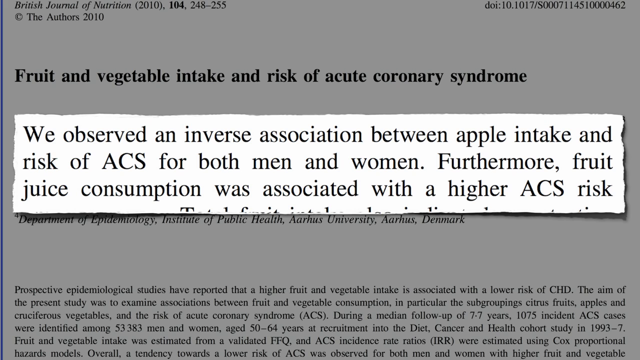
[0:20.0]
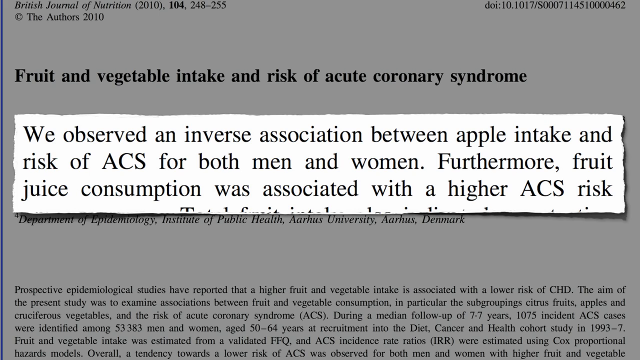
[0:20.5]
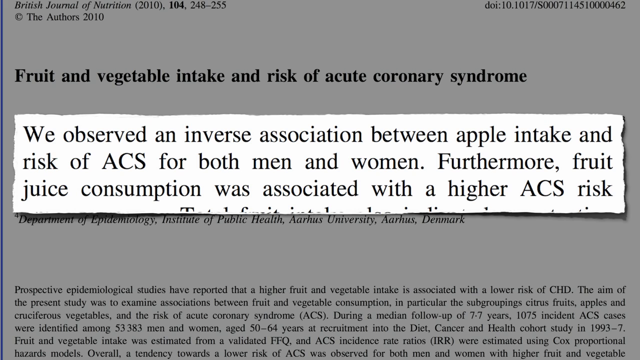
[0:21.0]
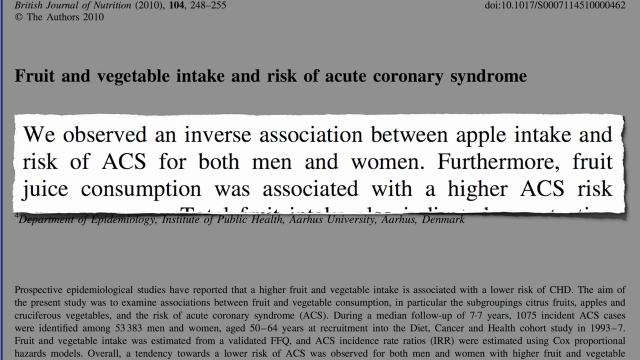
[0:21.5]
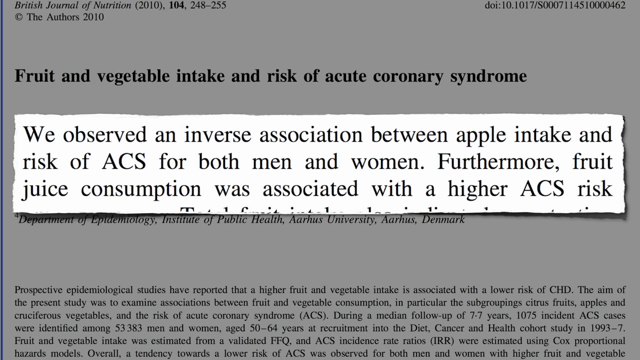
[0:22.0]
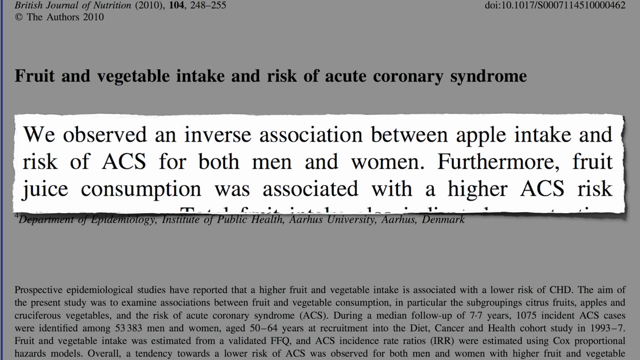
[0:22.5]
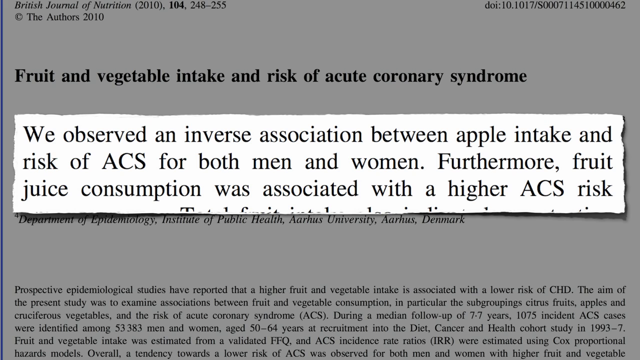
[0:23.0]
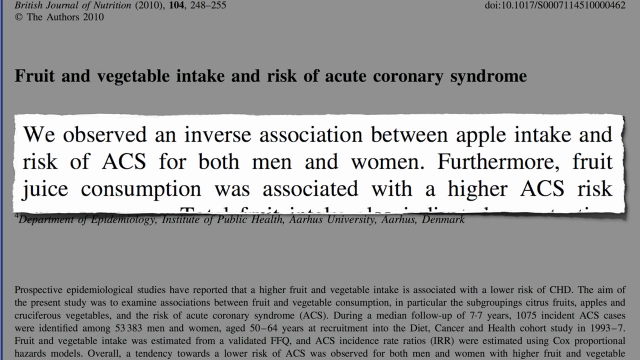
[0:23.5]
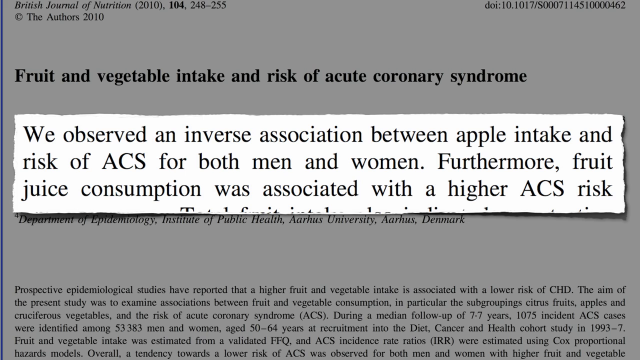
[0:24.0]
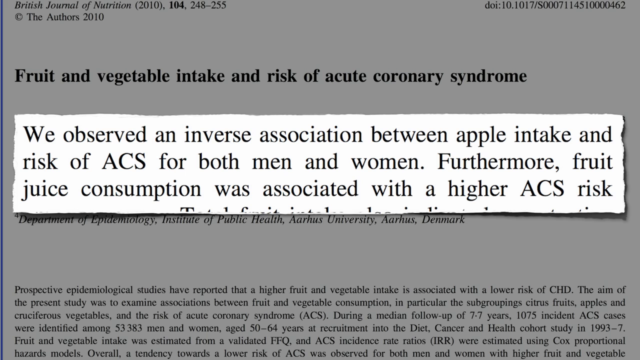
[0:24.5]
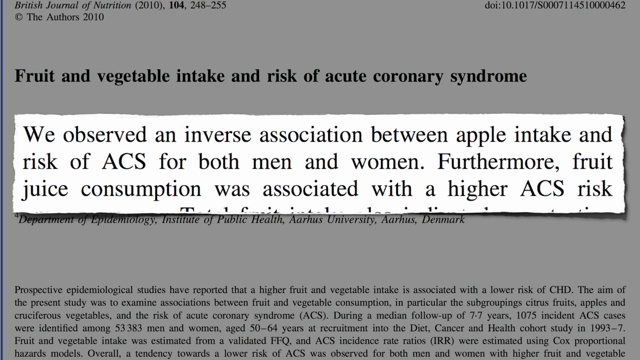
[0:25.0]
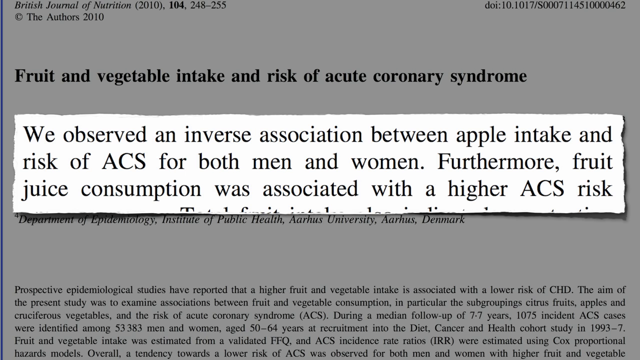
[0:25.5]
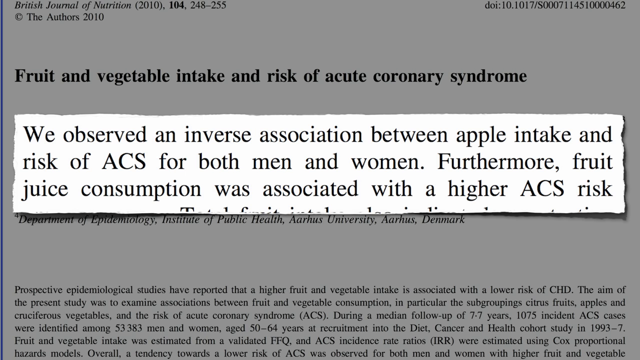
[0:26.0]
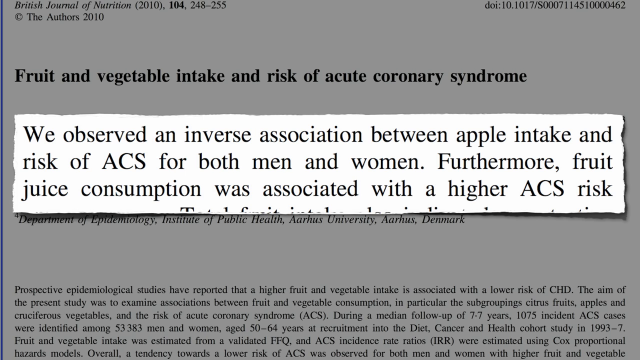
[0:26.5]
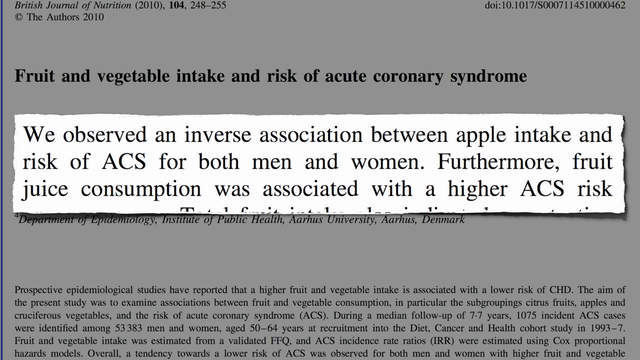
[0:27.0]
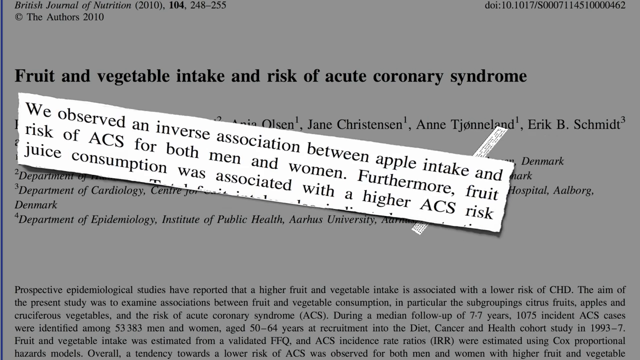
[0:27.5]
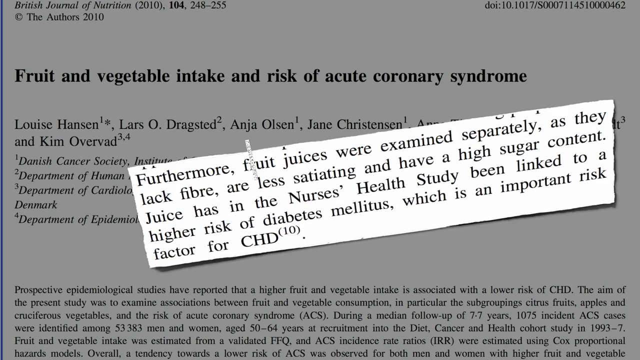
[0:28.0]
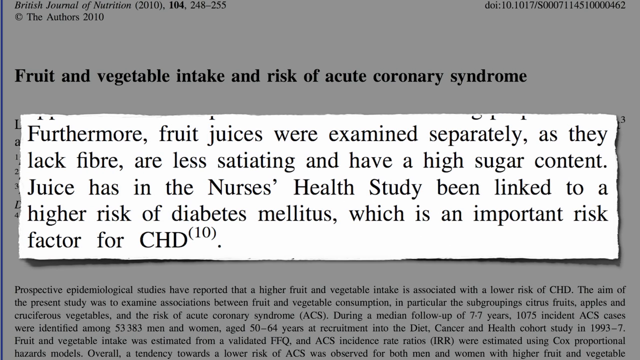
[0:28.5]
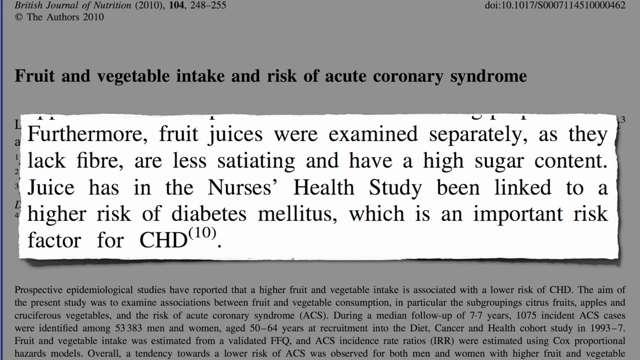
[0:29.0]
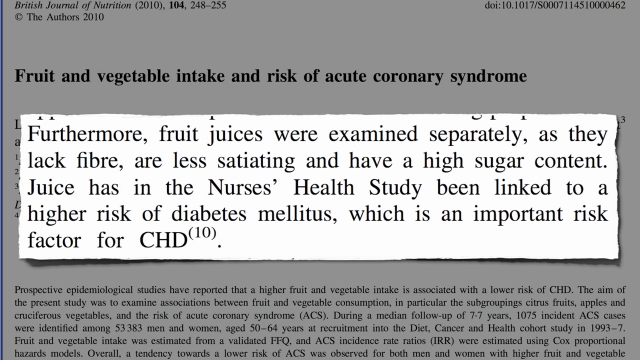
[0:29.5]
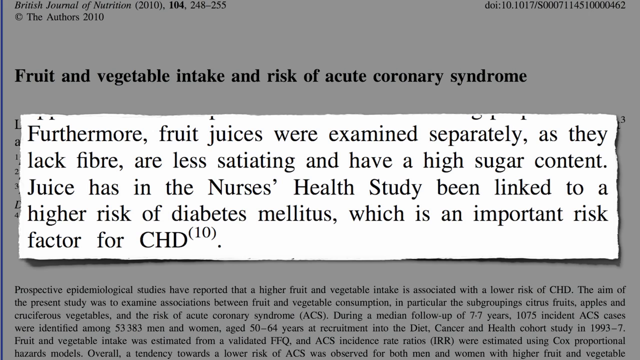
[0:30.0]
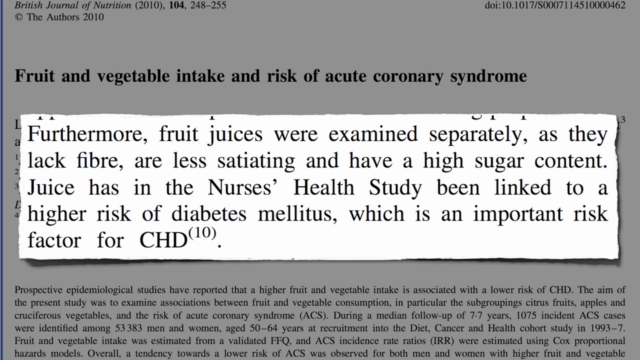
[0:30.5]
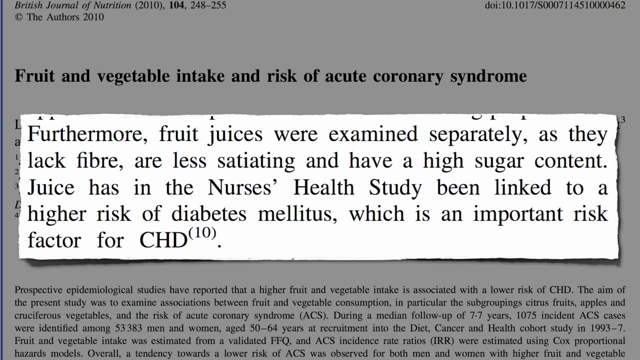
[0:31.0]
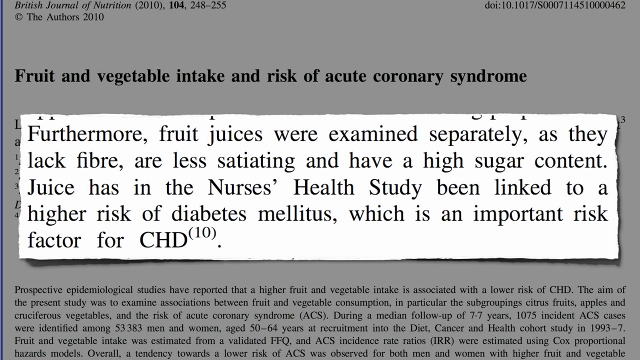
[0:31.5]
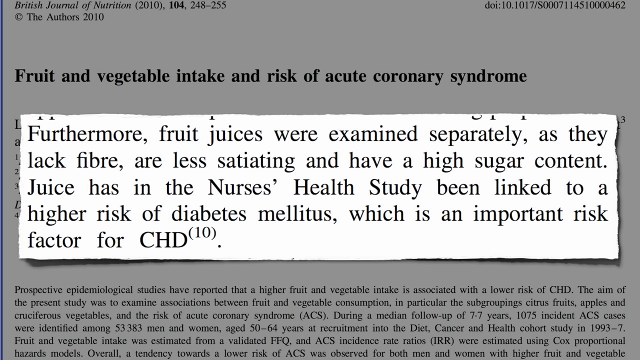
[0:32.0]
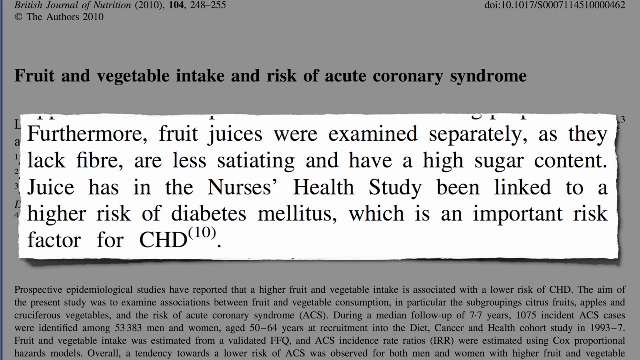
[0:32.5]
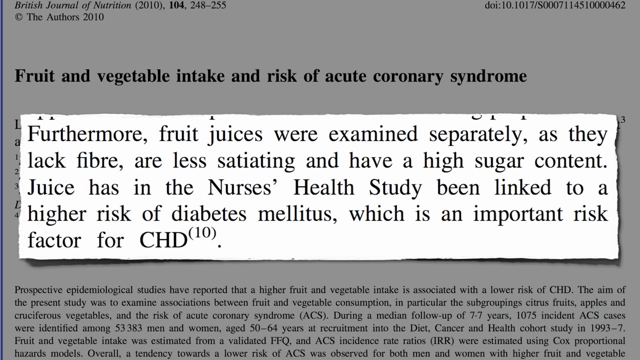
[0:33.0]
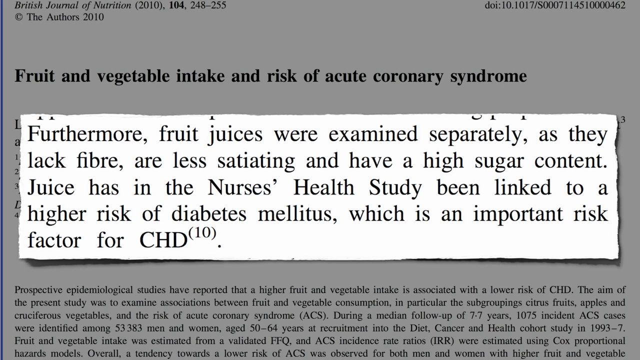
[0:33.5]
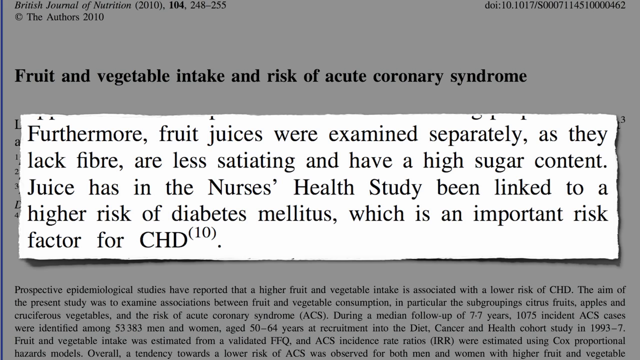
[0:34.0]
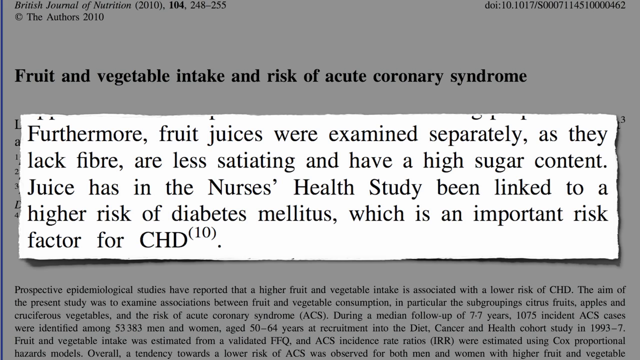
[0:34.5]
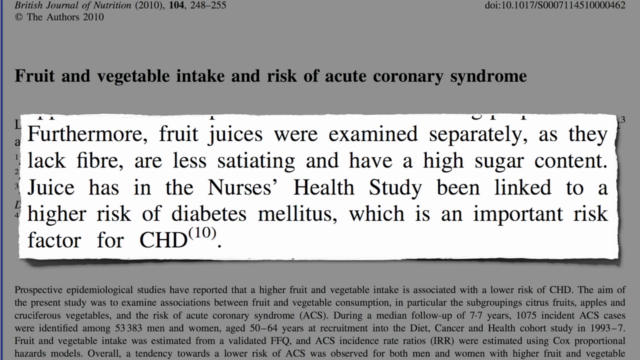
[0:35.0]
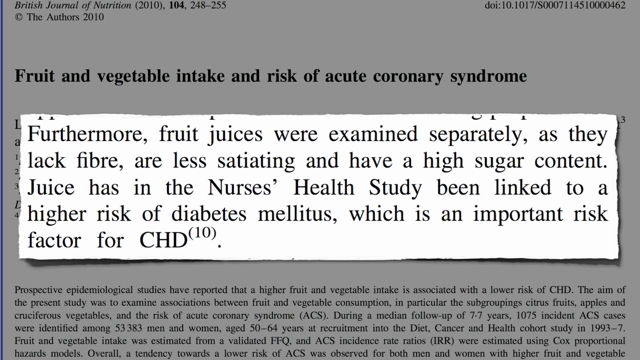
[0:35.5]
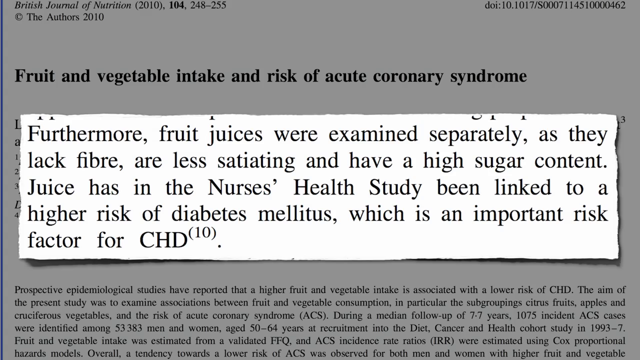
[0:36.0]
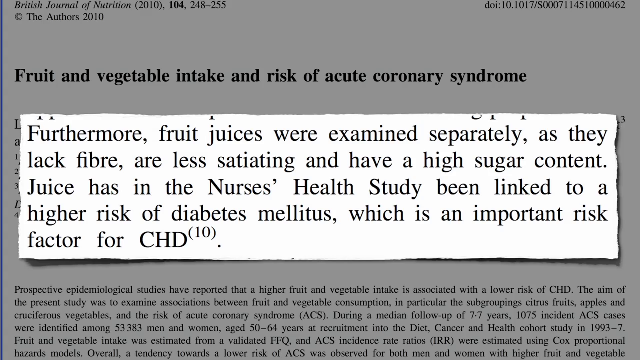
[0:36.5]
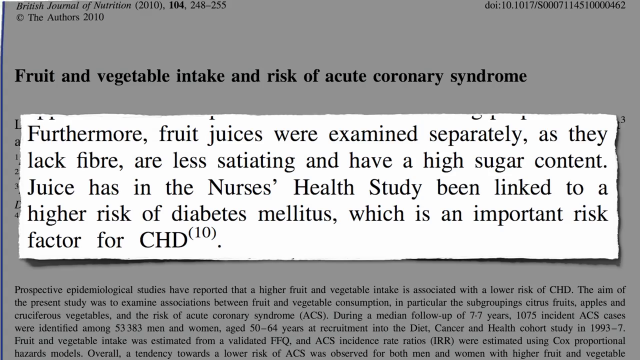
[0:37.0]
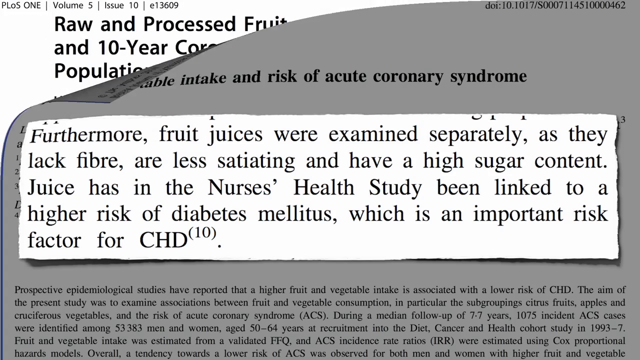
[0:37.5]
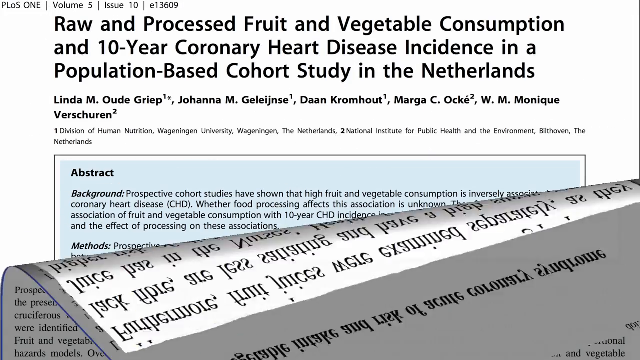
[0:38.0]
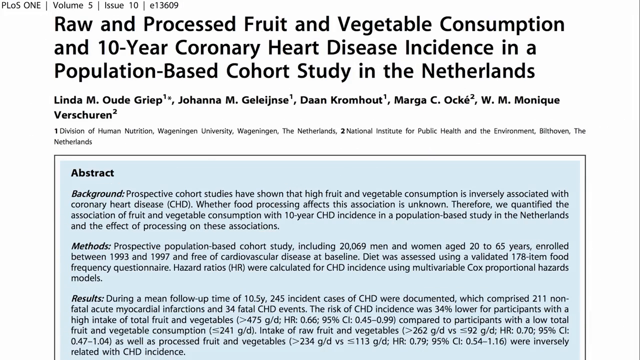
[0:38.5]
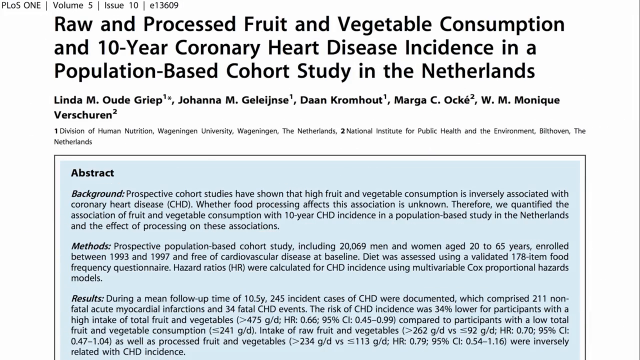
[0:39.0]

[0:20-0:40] The study on screen is about fruit and vegetable intake and risk of acute coronary syndrome, from the British Journal of Nutrition 2010, with mostly Danish authors. The study is in the background, and a big white rectangular box on the screen blows up the part of the text meant for focus: "we observed an inverse association between apple intake and risk of ACS for both men and women. Furthermore, fruit juice consumption was associated with a higher ACS risk." The video moves to a new slide with a new rectangle reading "furthermore, fruit juices were examined separately as they lacked fiber, are less satiating and have a high sugar content. Juice has in the nurse's health study been linked to a higher risk of diabetes mellitus, which is an important risk factor for CHD," with the number 10 in parentheses next to it. Next comes a study titled "raw and processed fruit and vegetable consumption and 10 year coronary heart disease incidence in a population based cohort study in the Netherlands," with its abstract shown in blue in a rectangle.